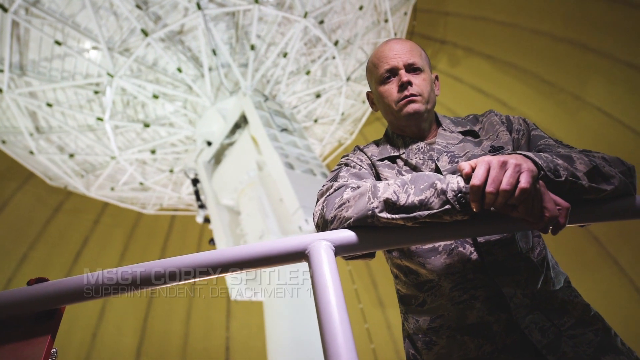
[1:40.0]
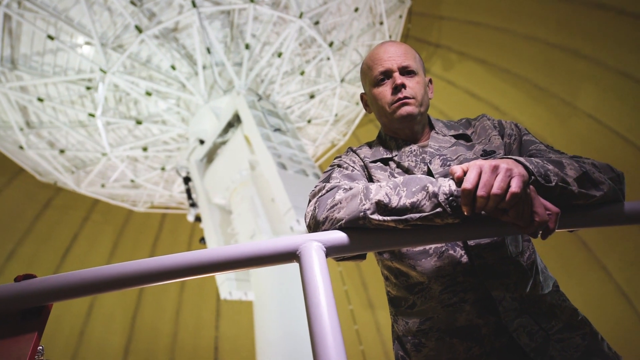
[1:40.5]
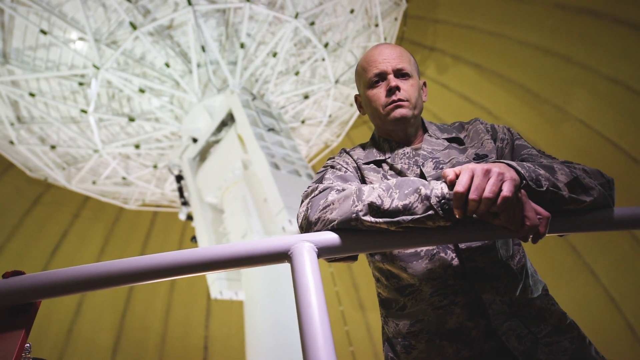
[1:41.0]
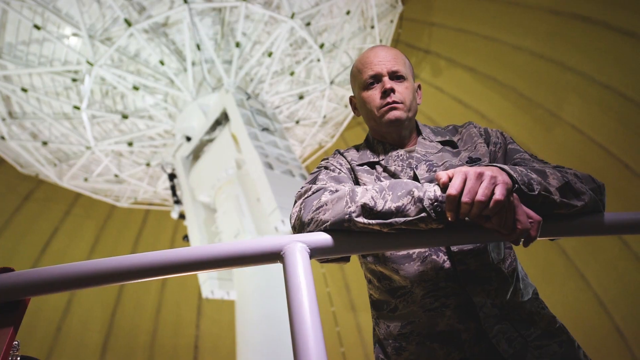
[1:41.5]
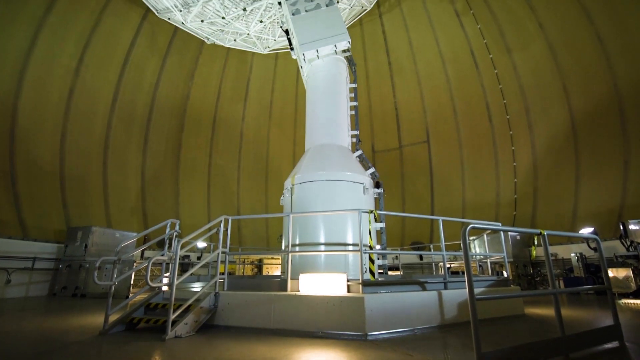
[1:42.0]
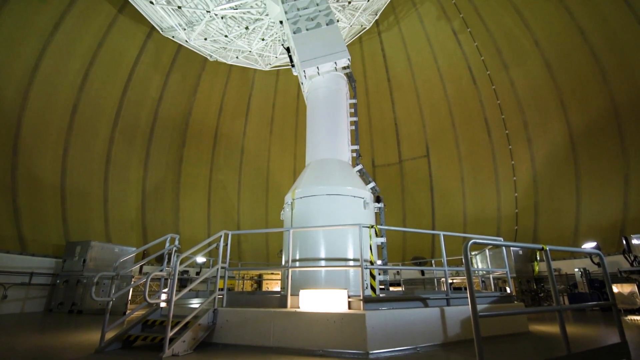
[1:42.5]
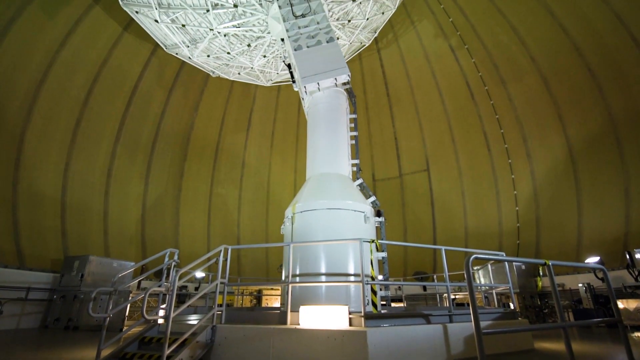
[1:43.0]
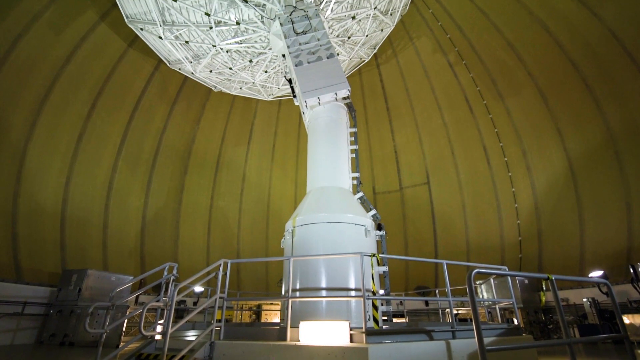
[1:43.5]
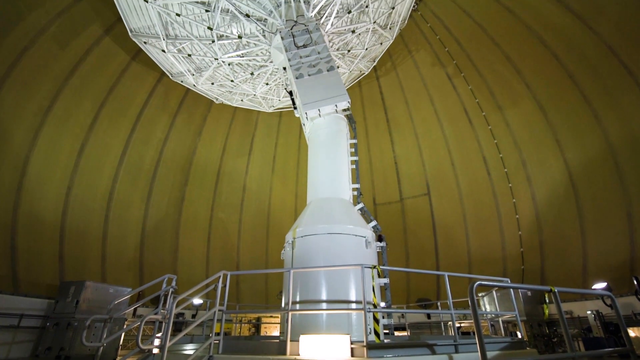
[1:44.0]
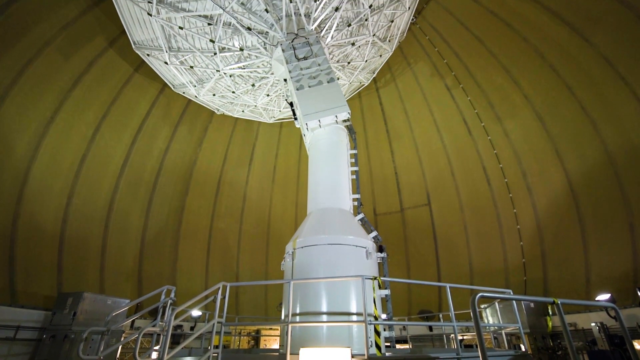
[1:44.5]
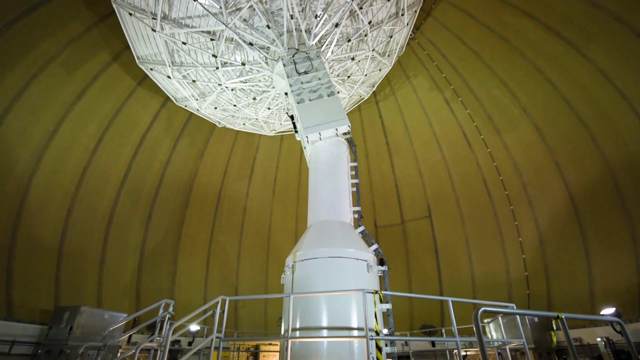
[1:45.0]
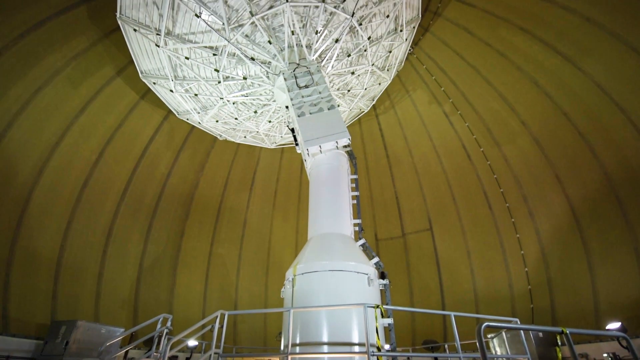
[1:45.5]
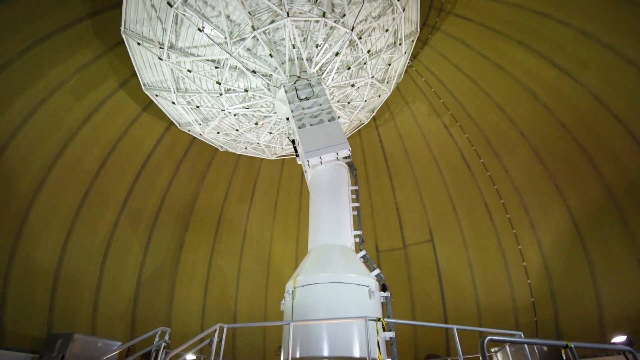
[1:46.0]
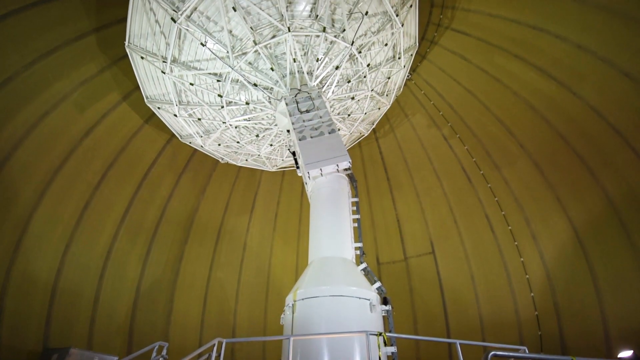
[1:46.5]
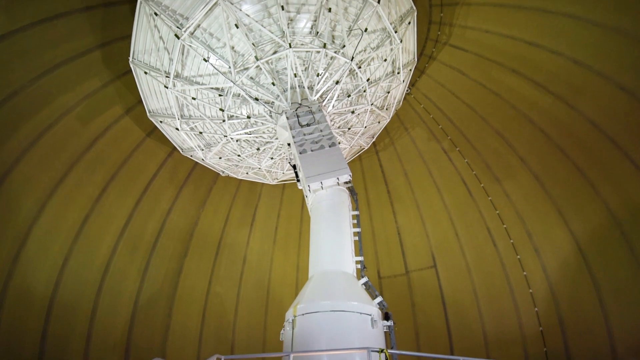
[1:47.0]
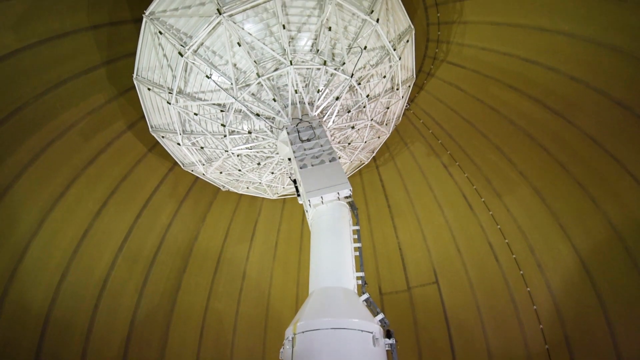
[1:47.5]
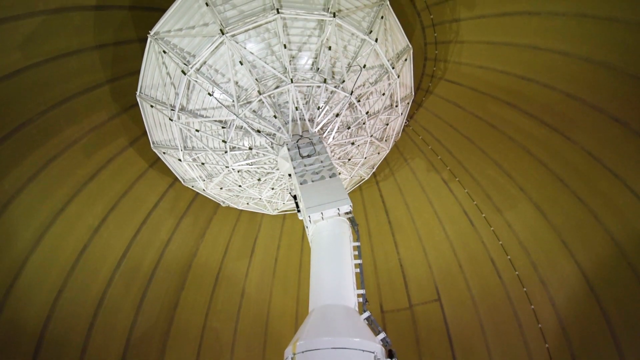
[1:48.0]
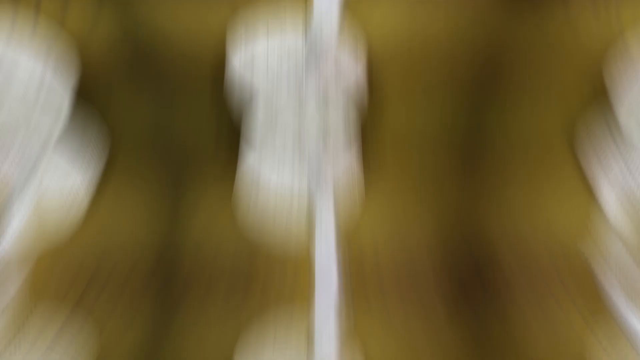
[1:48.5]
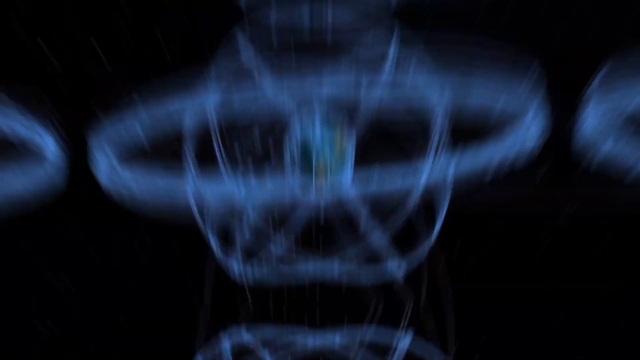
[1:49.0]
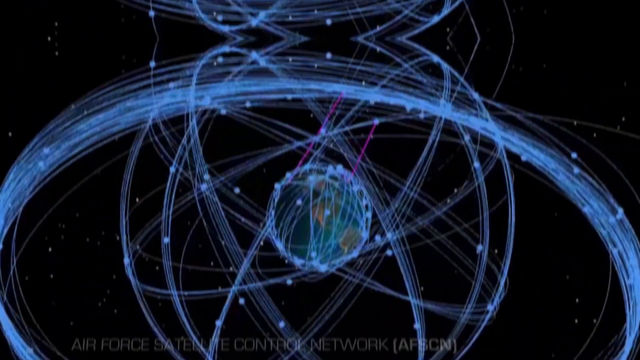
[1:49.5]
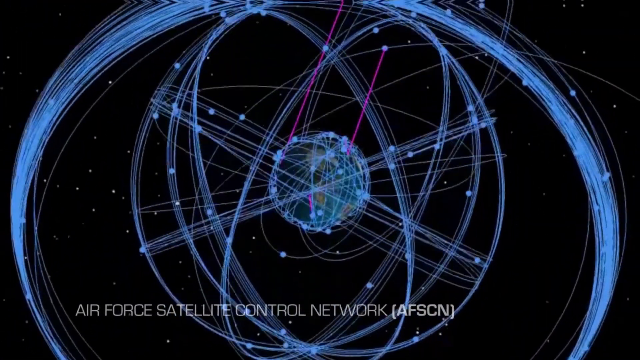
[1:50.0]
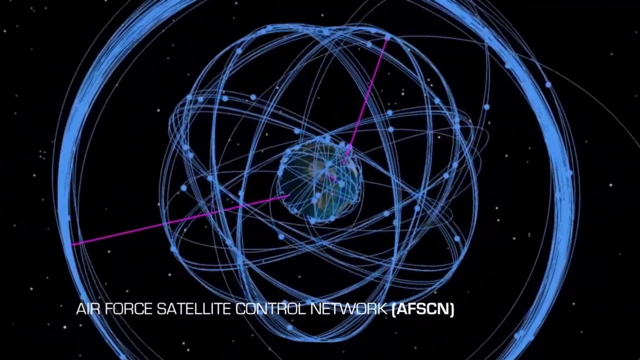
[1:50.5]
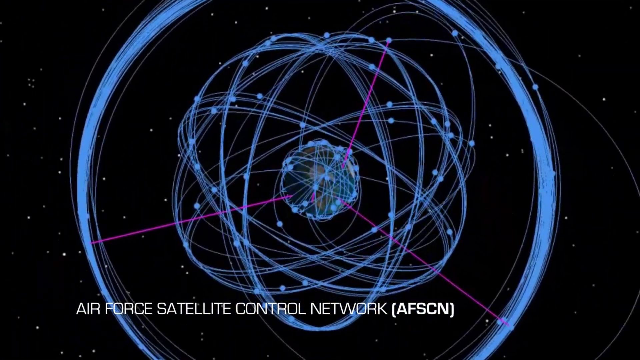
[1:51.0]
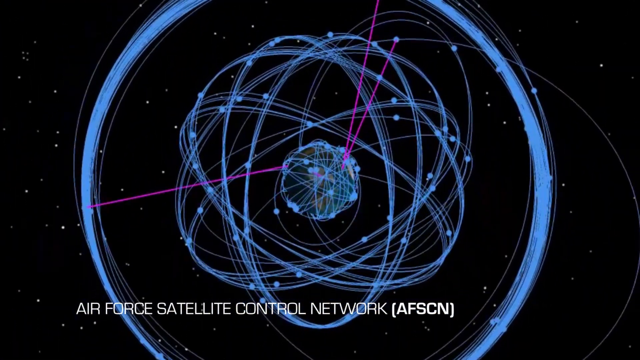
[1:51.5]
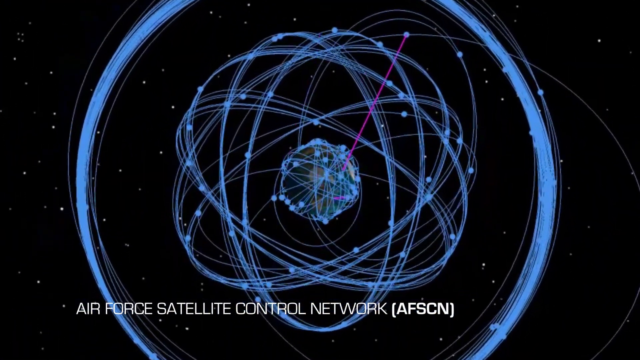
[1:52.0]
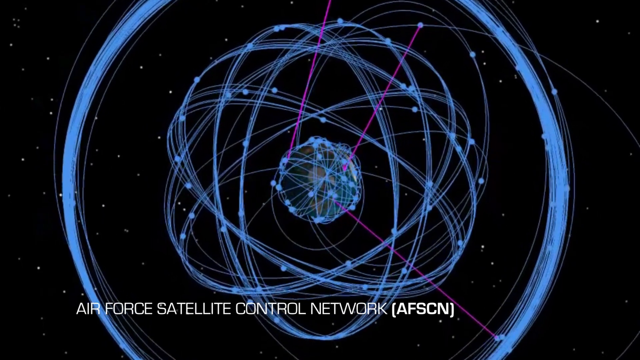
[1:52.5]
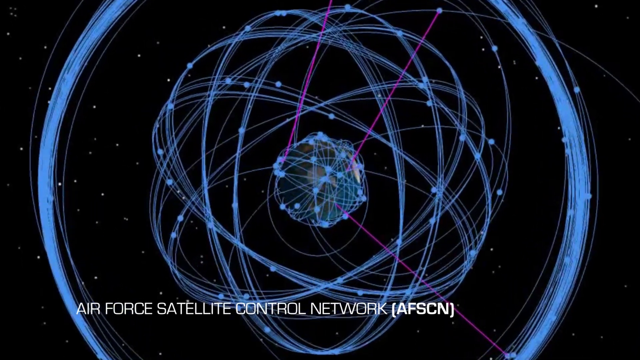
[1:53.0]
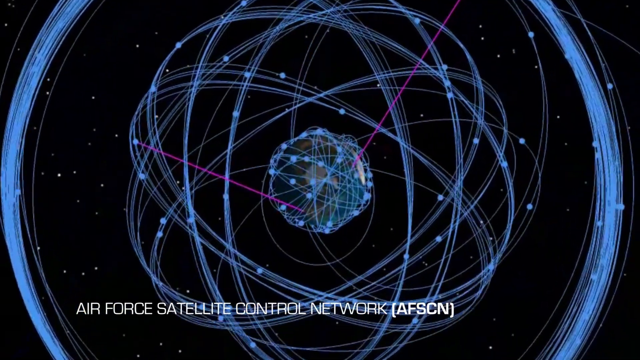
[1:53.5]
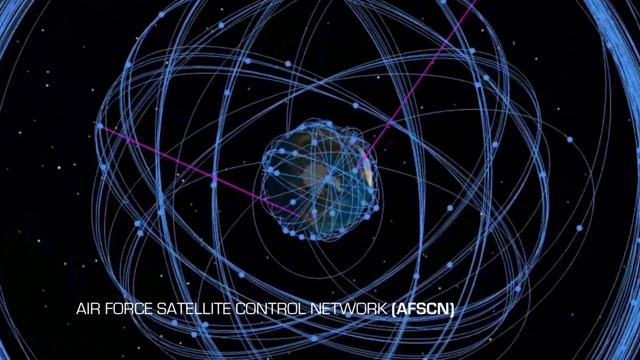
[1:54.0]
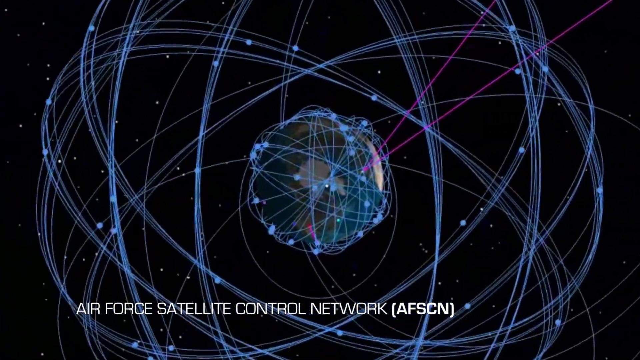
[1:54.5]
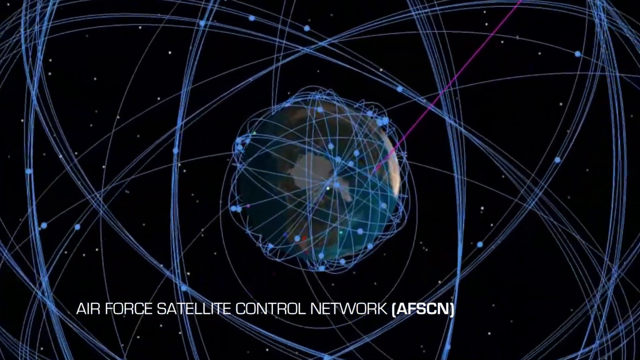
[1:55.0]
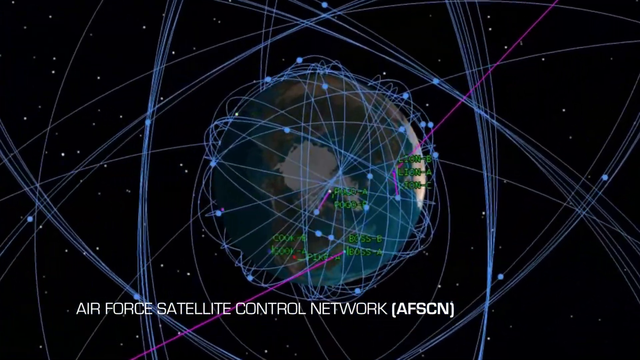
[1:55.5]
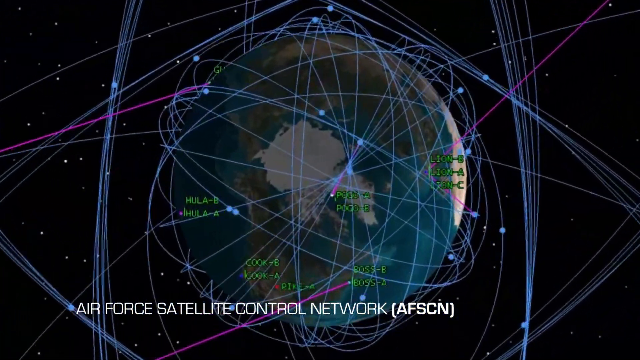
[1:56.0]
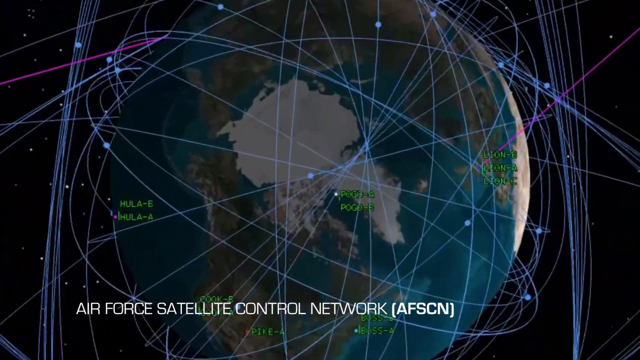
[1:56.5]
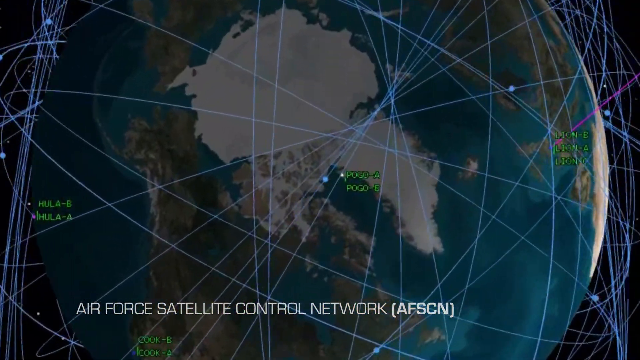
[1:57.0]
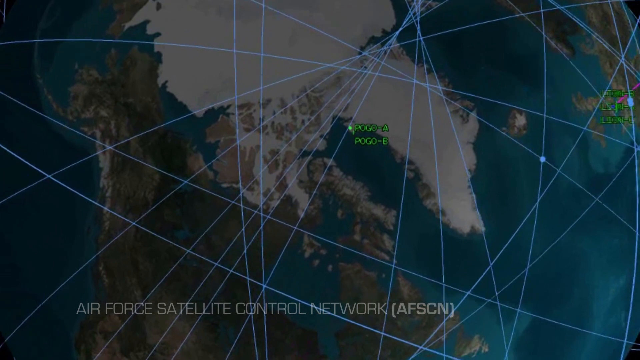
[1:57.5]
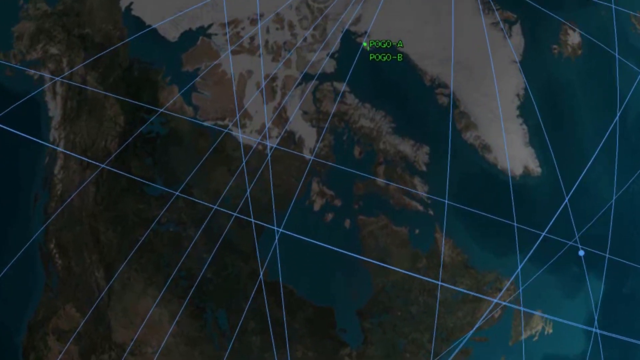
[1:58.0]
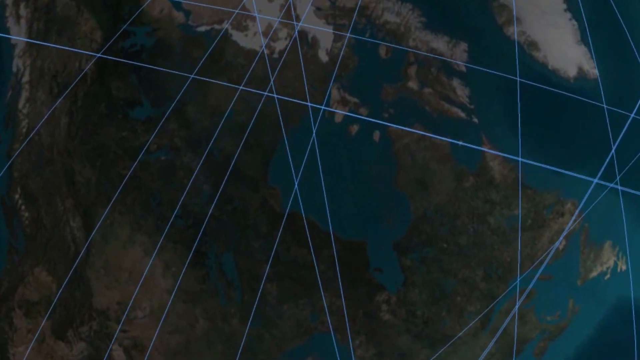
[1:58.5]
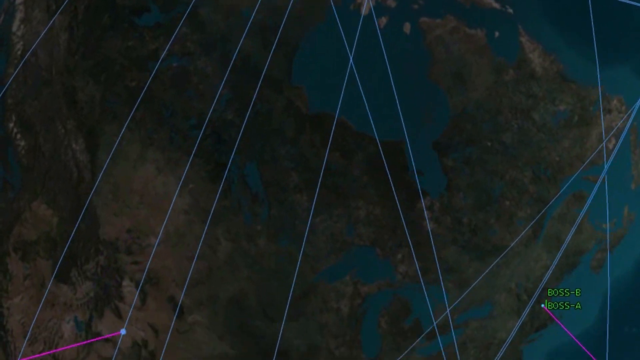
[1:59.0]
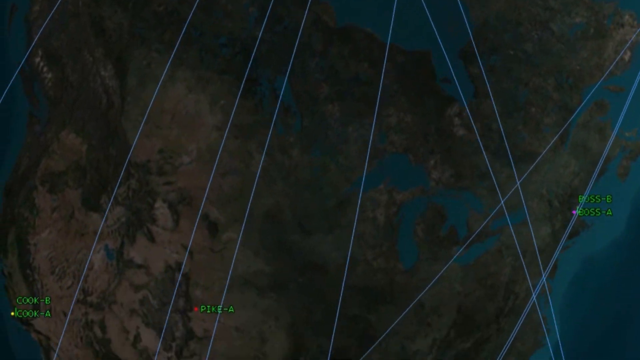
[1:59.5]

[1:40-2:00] Another military member is shown inside the dome-shaped building, with the large white satellite behind him. He rests his arms on top of a metal banister, his right hand resting on his left wrist, and looks sternly at the camera. Another view of the large satellite inside the dome-shaped room shows a staircase at its base and metal banisters surrounding it. Lines form the dome inside the building, and they are a light yellow color. An animation then shows a satellite in space, labeled Air Force Satellite Control Network, or the AFSCN. A molecule-looking structure is surrounded by a blue light, with balls moving throughout it and red lasers pointing at and surrounding the object.